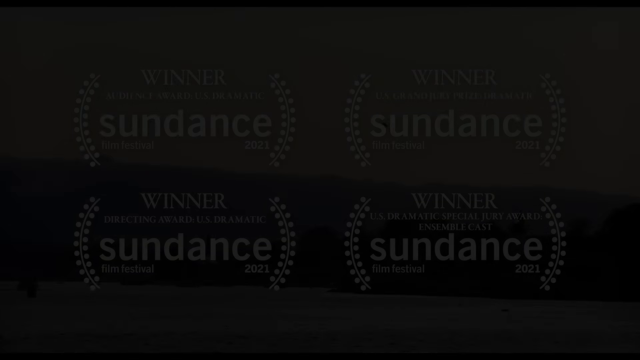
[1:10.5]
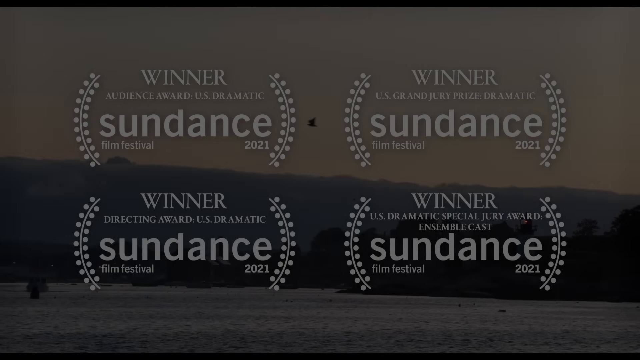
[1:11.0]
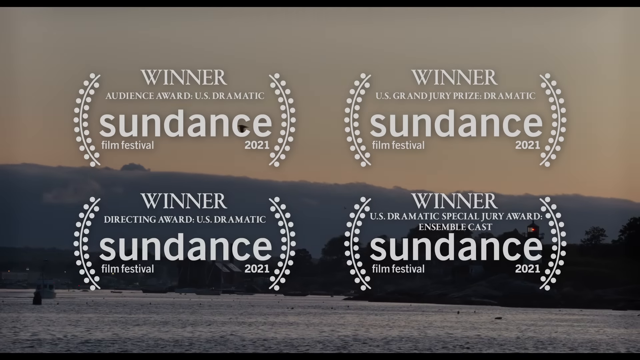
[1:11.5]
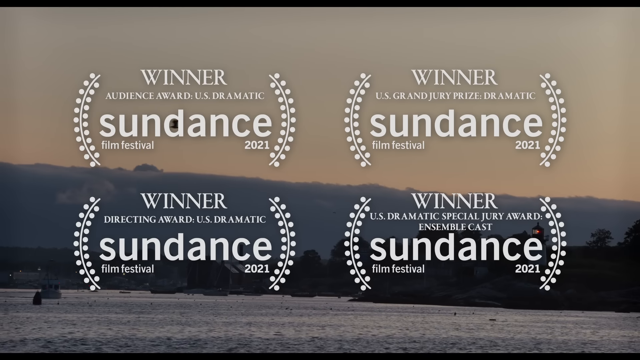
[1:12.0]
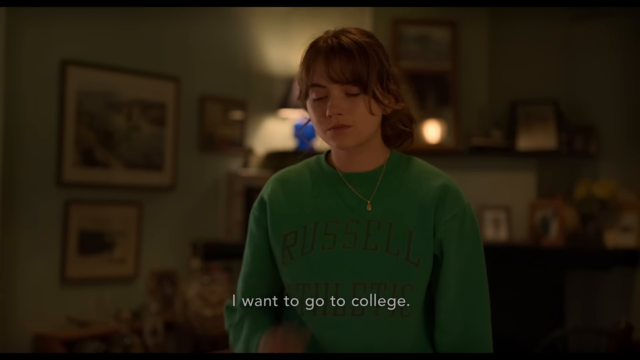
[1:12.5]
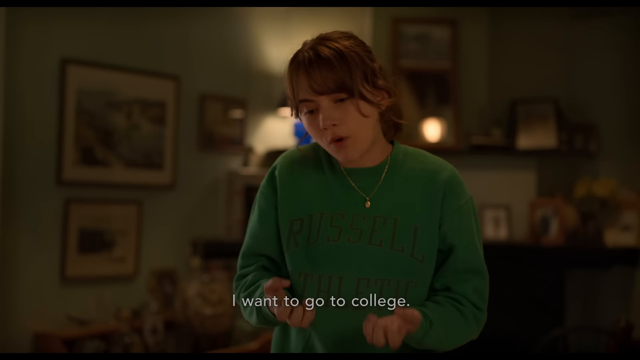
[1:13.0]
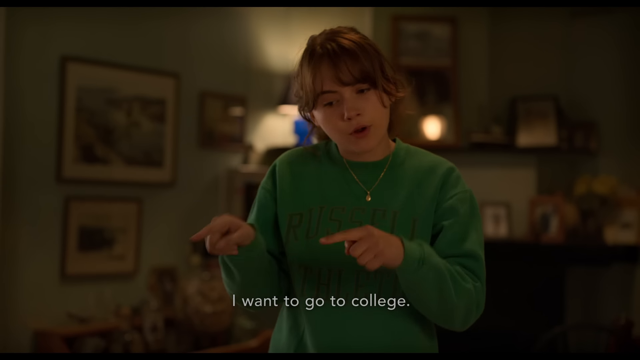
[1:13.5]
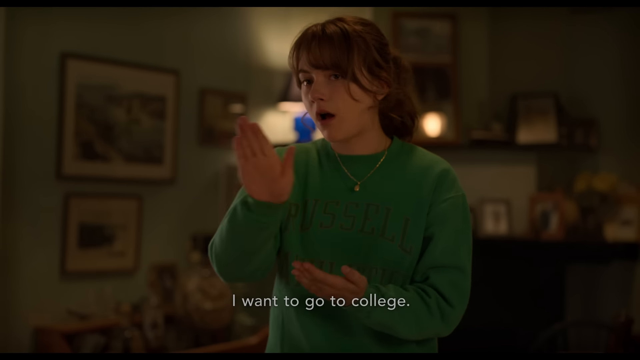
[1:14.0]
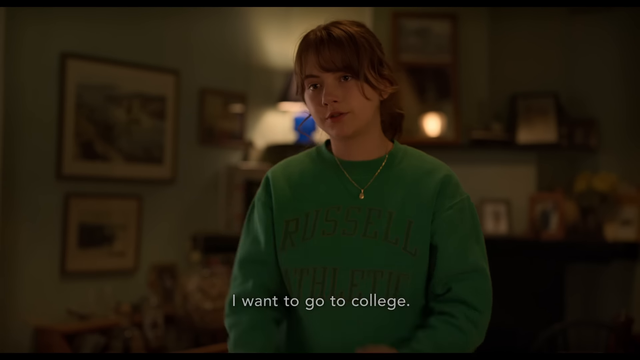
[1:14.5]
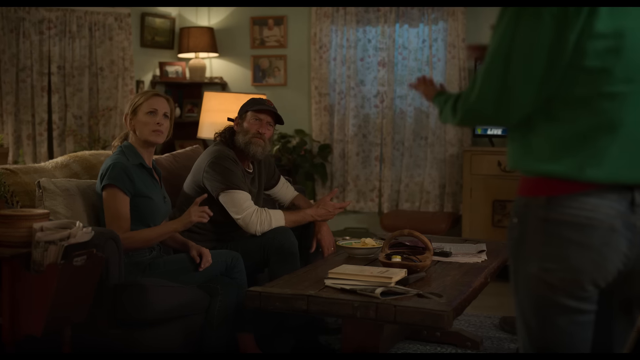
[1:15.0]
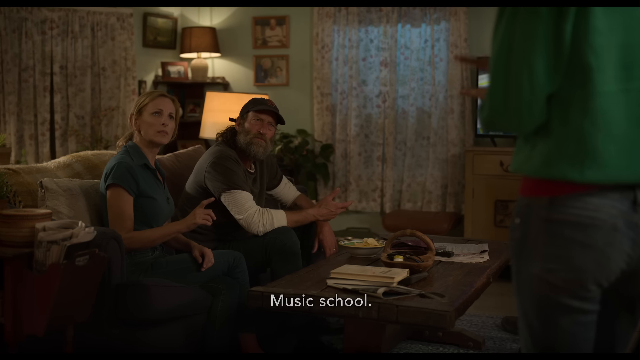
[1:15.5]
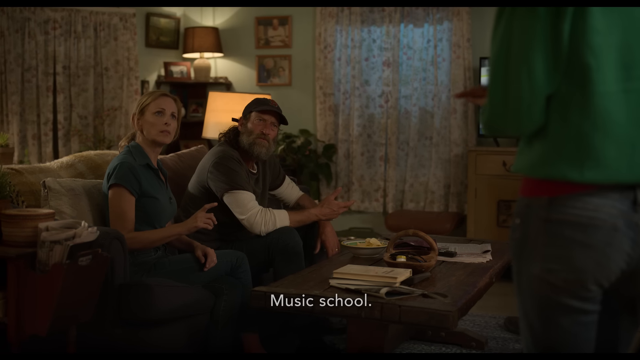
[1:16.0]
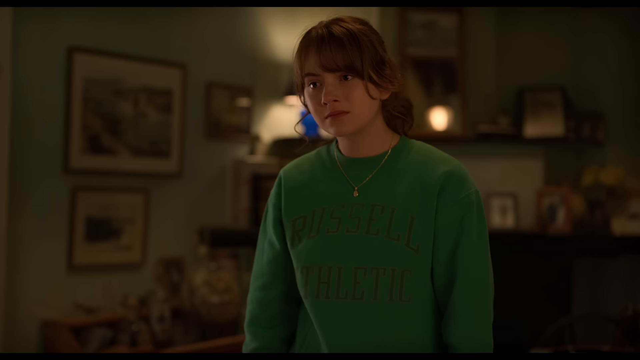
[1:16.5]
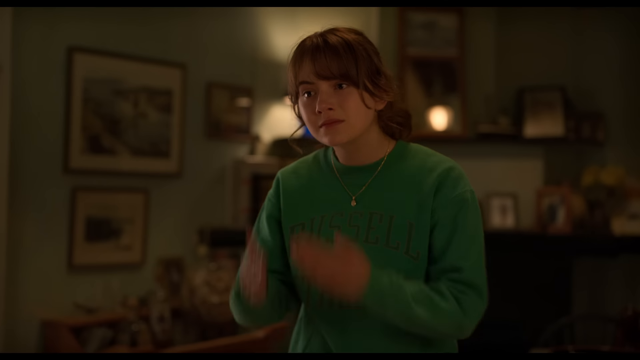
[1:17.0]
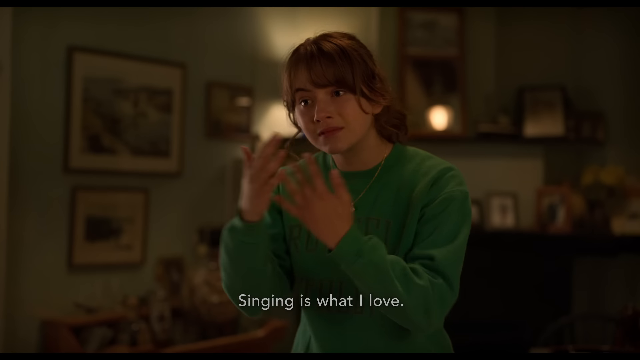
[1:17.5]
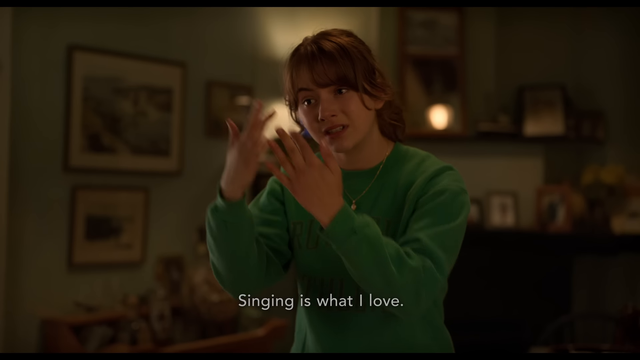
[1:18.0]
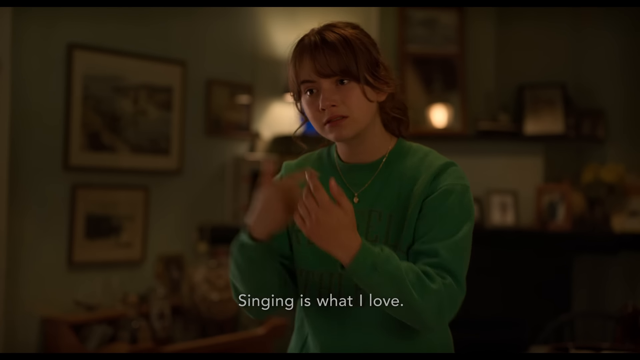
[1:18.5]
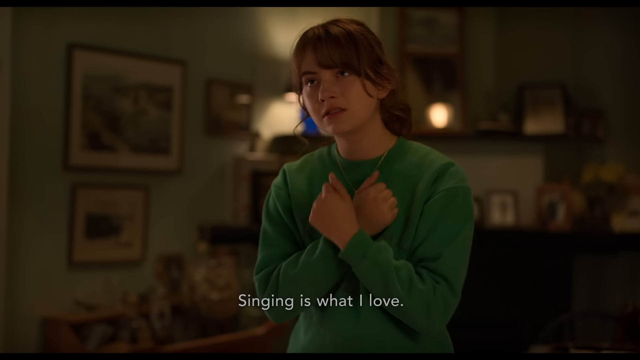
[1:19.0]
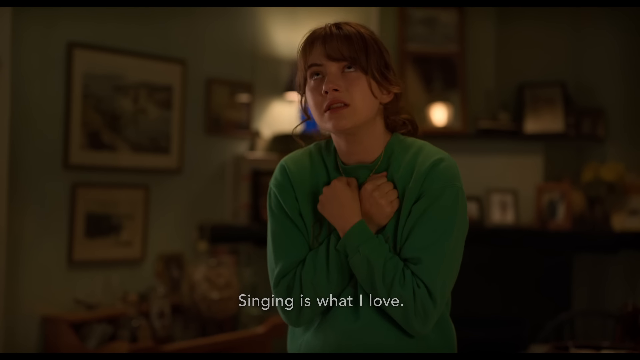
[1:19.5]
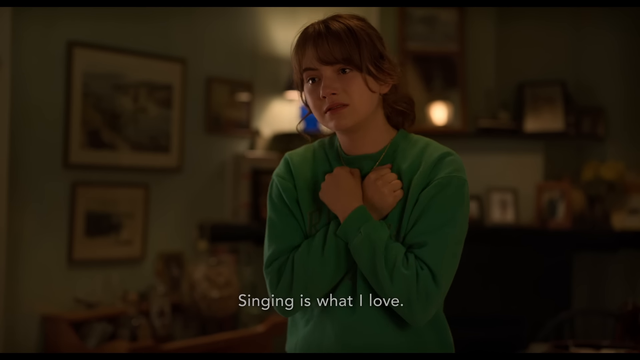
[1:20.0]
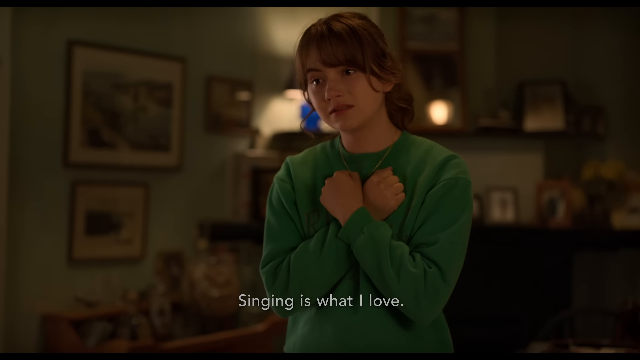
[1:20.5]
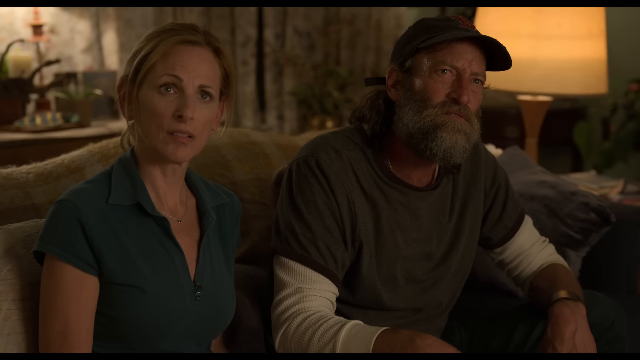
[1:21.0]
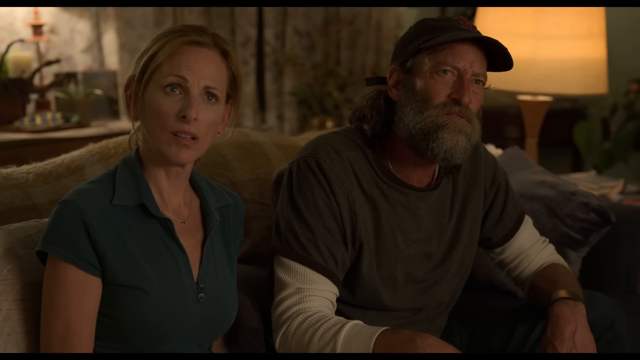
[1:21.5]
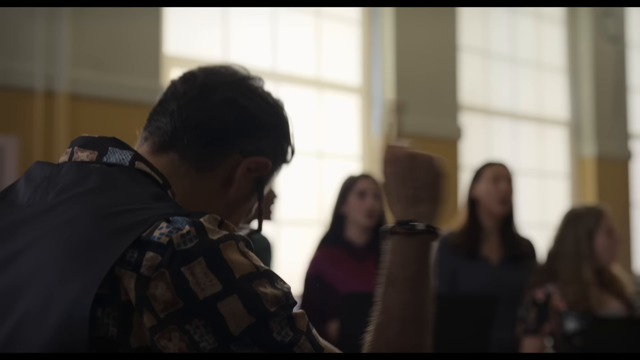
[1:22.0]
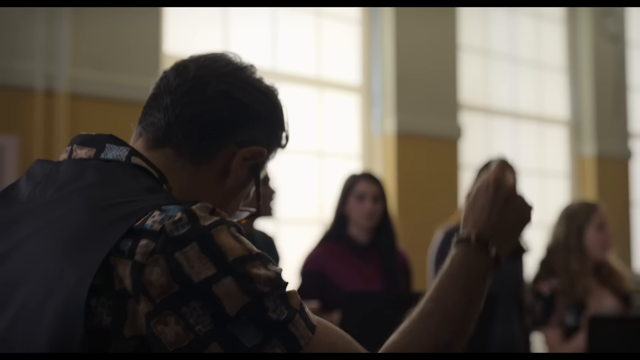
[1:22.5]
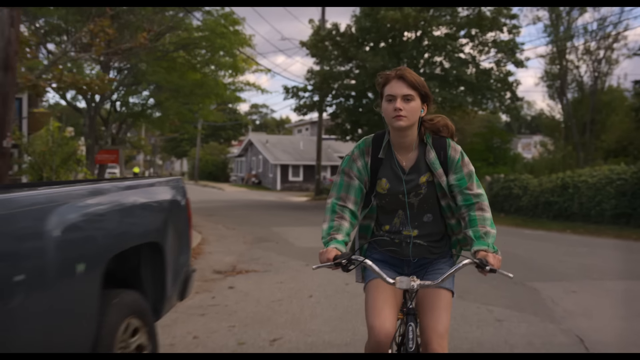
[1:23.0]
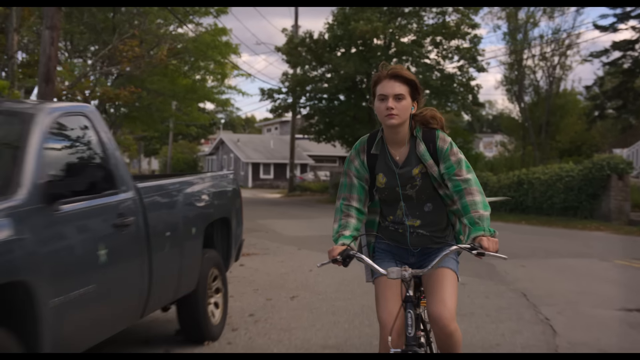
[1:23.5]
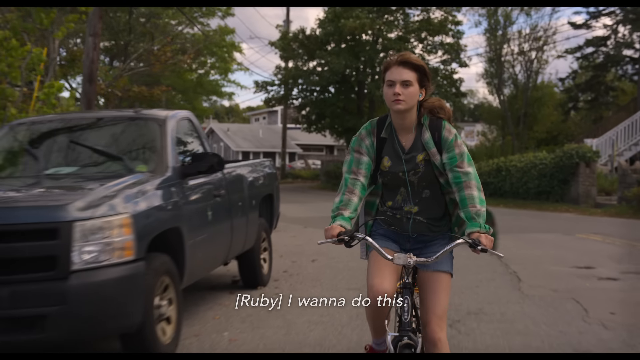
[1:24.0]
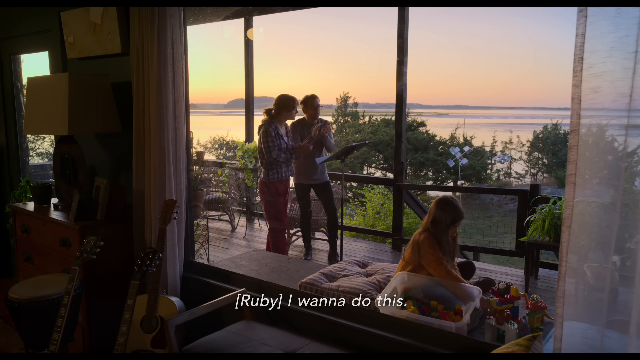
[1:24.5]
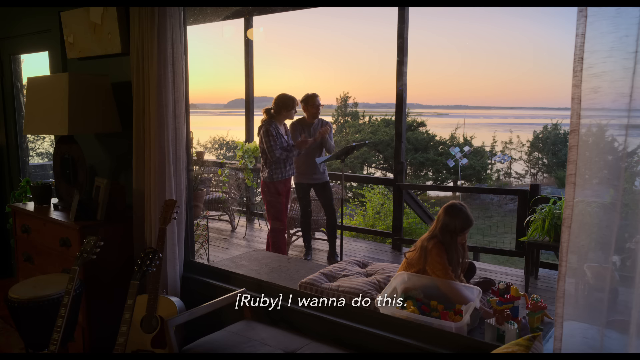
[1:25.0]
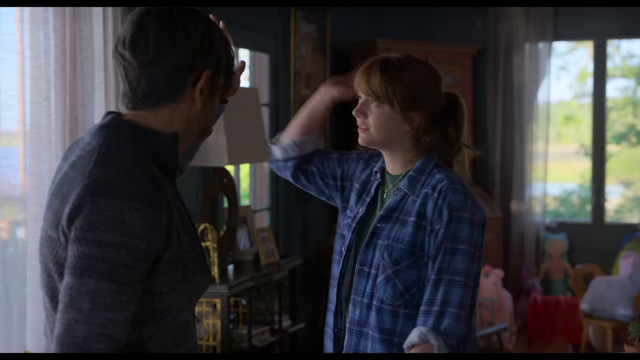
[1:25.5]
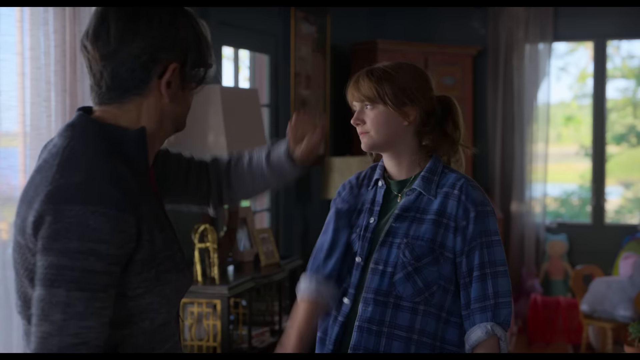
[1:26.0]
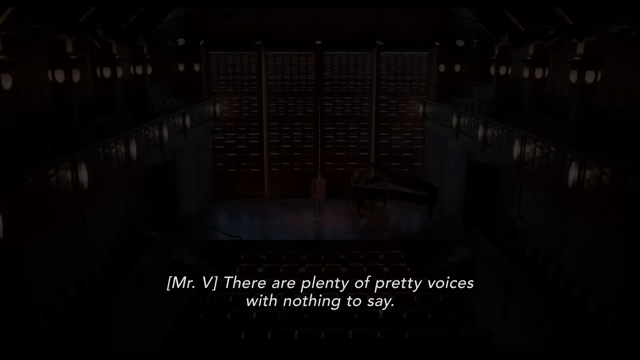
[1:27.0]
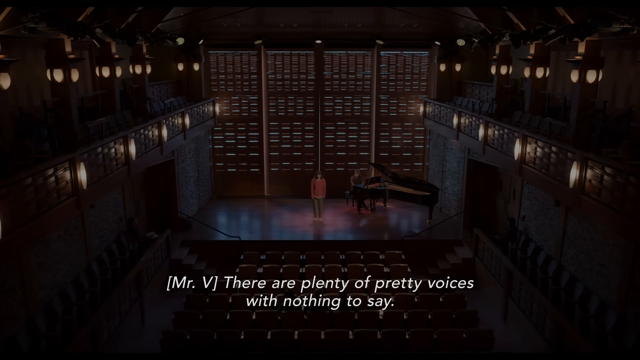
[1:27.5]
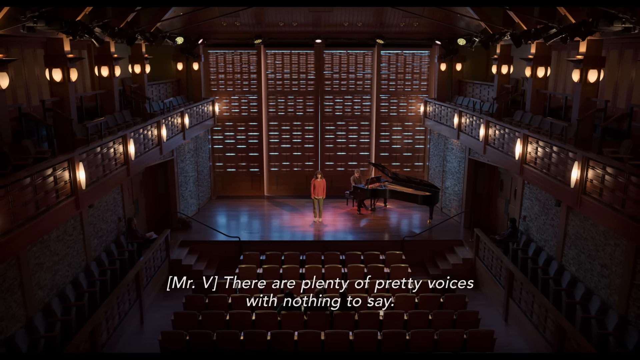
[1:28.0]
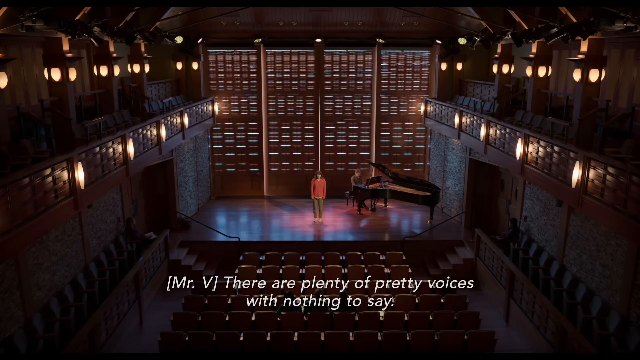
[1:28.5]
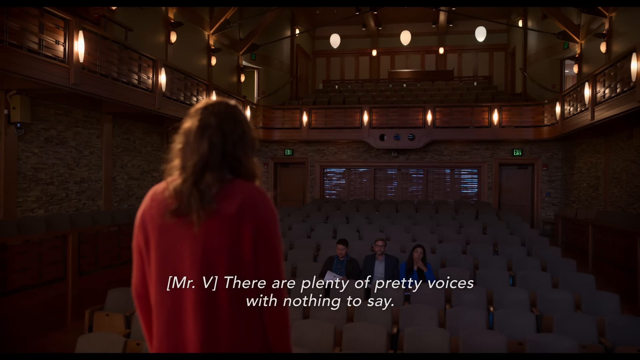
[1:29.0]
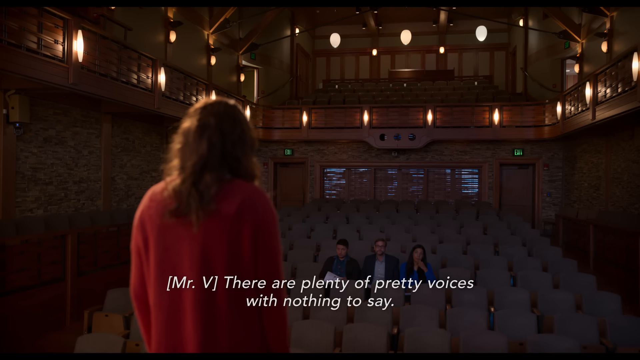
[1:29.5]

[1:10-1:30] Various awards appear on screen as badges that say "Winner" with branches on either side, reading "Winner, Audience Award, U.S. Dramatic," "U.S. Grand Jury Prize Dramatic," "Directing Award, U.S. Dramatic," and "U.S. Dramatic, Special Jury Award, Ensemble Cast." These are from the Sundance Film Festival, all from 2021. Next, the teenage girl in a green sweater gestures with her hands as captions underneath say "I want to go to college." Her parents sit on a couch in a home with curtains on the windows and light green walls. She seems to use her eyes to communicate, and she says "singing is what I love," then crosses her arms across her chest. The parents look on, appearing dumbfounded, shocked, or maybe concerned. Then the girl rides a bike next to a pickup truck on her left.